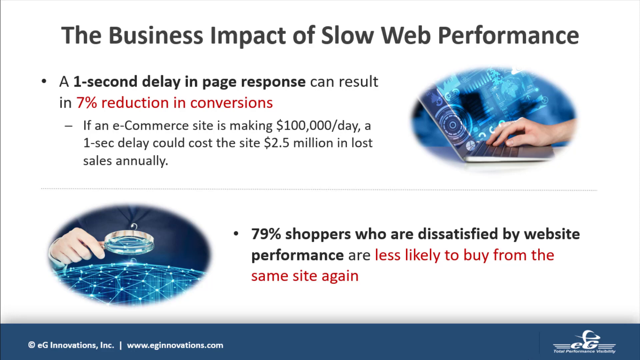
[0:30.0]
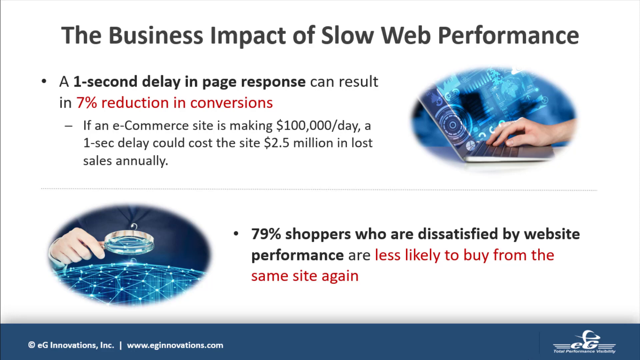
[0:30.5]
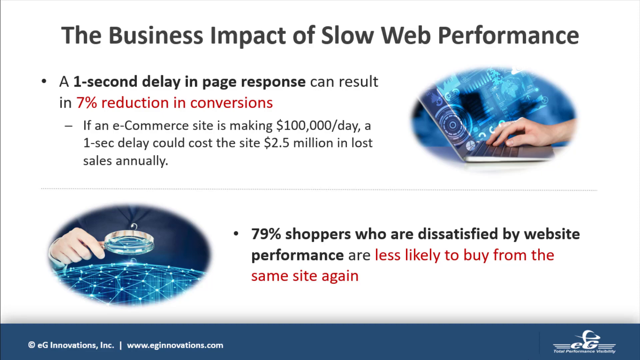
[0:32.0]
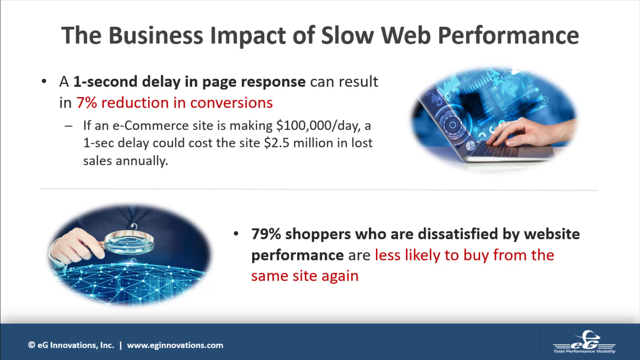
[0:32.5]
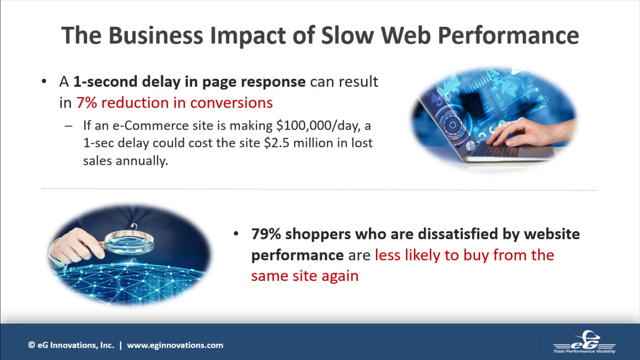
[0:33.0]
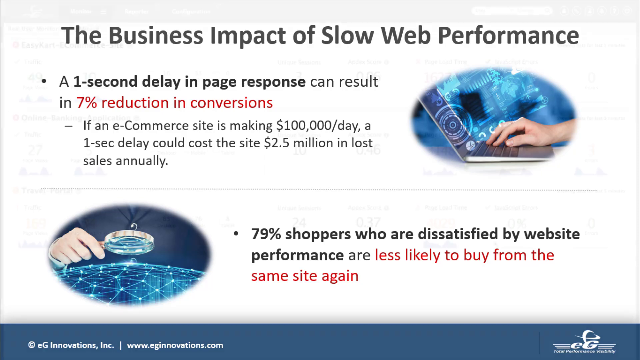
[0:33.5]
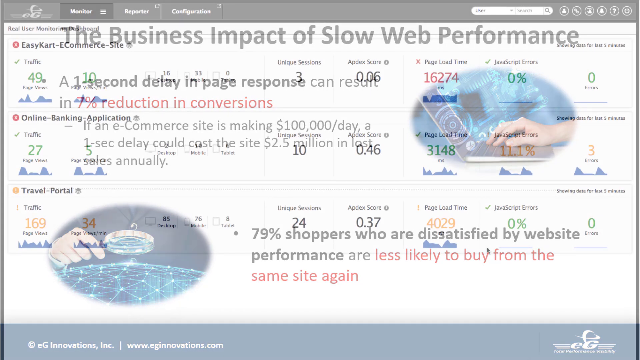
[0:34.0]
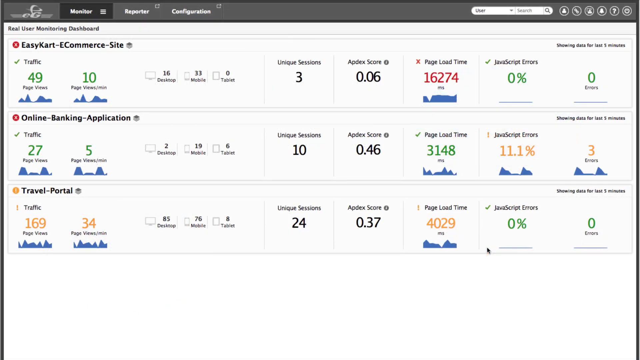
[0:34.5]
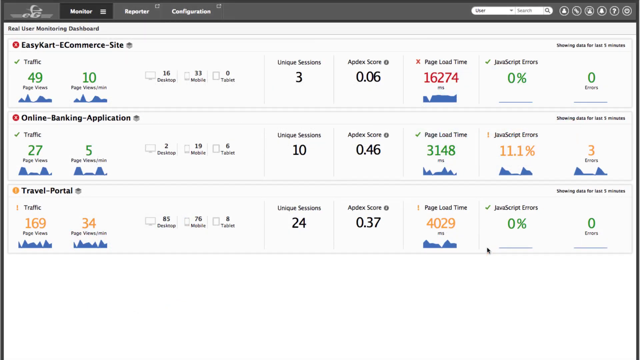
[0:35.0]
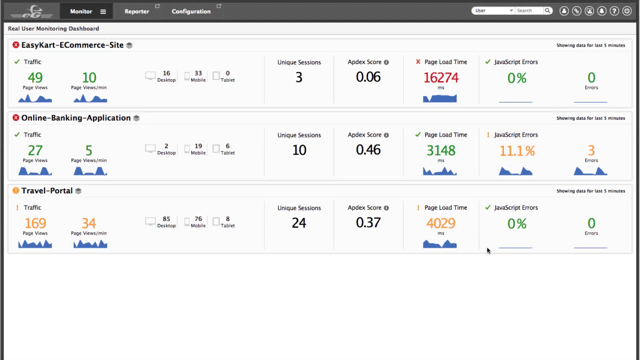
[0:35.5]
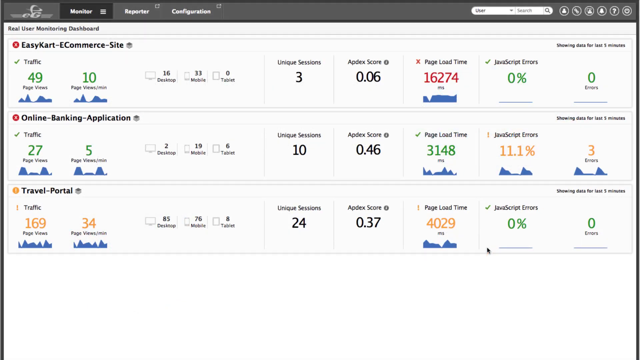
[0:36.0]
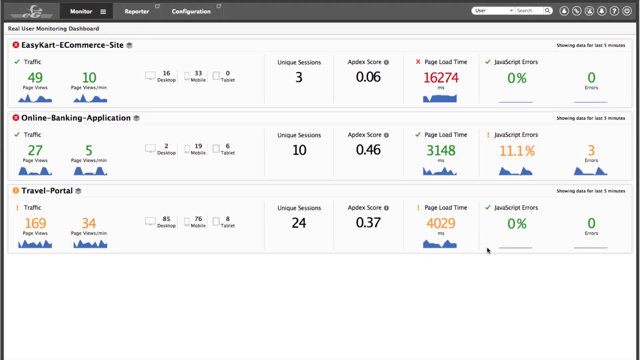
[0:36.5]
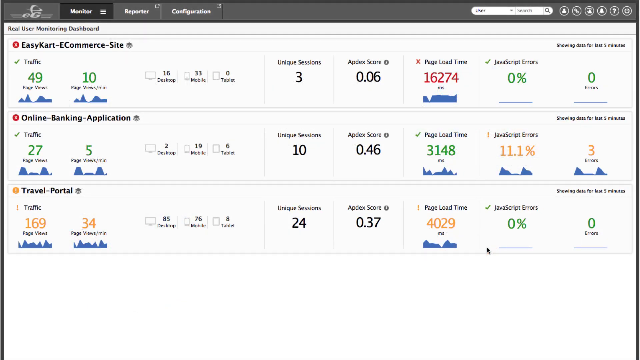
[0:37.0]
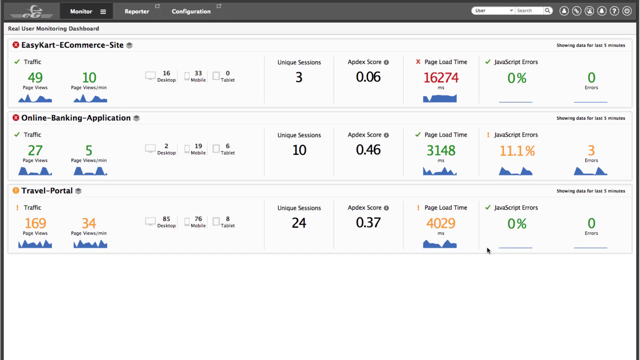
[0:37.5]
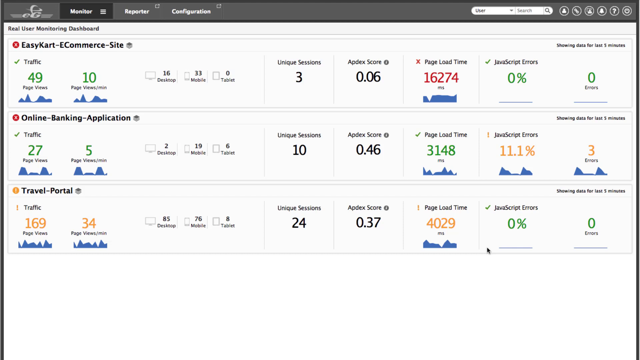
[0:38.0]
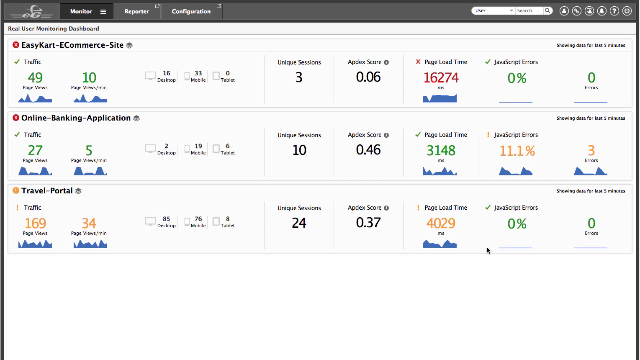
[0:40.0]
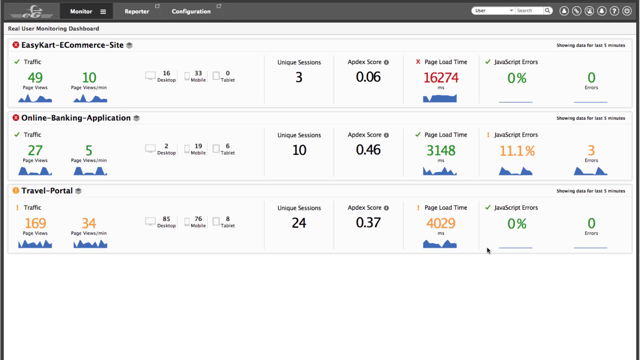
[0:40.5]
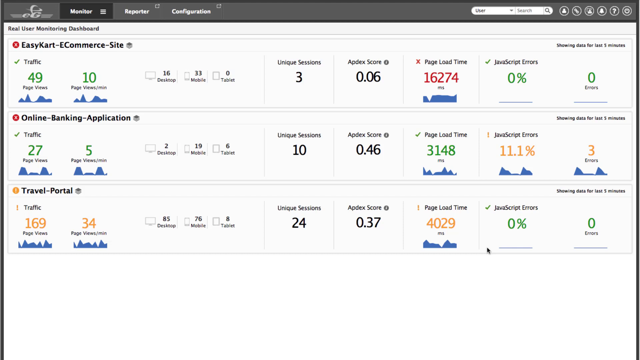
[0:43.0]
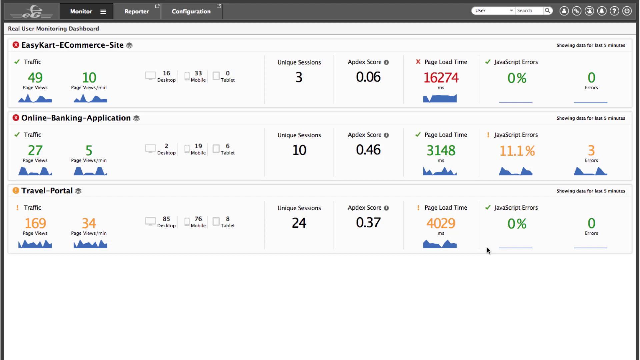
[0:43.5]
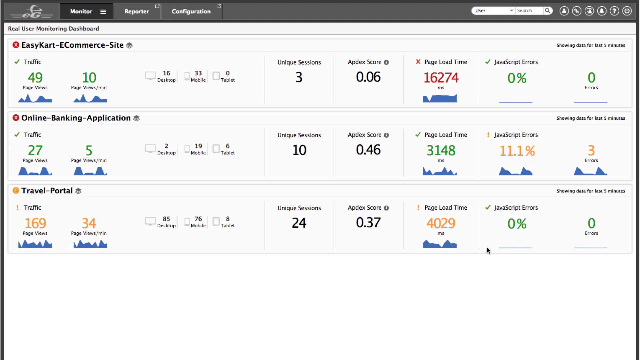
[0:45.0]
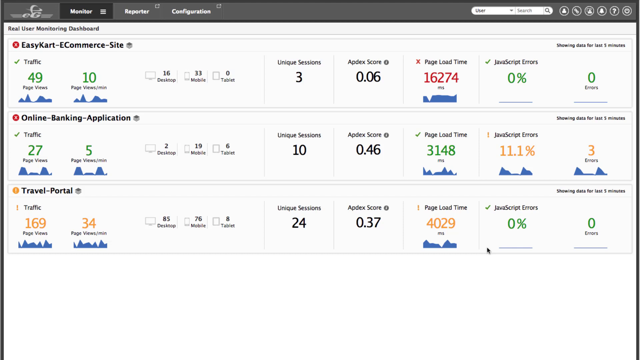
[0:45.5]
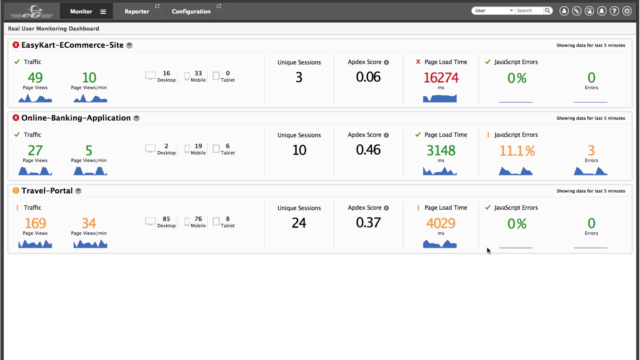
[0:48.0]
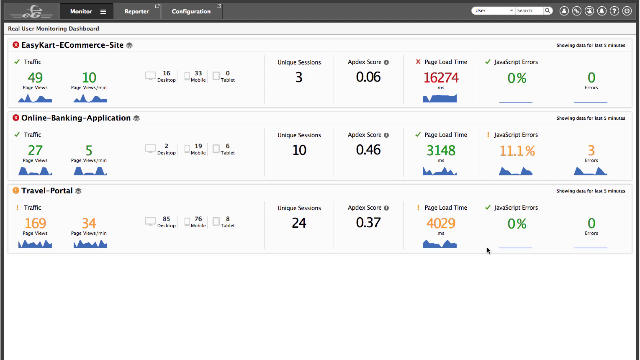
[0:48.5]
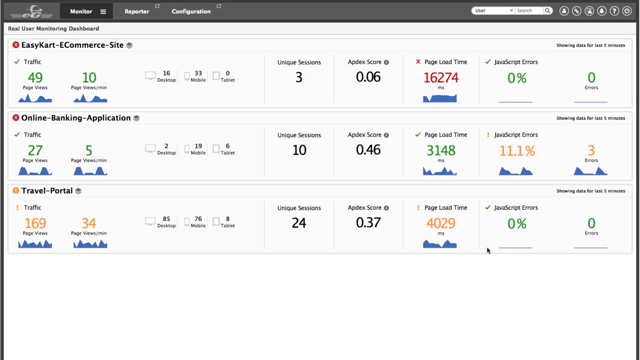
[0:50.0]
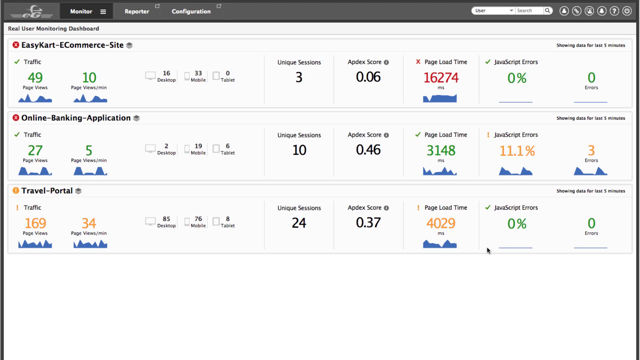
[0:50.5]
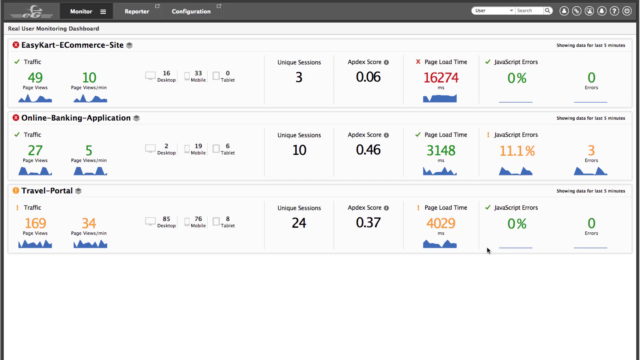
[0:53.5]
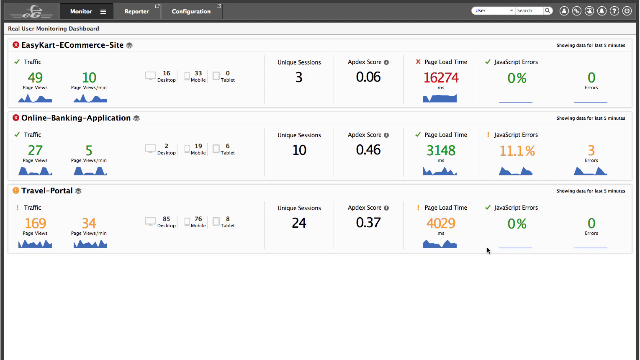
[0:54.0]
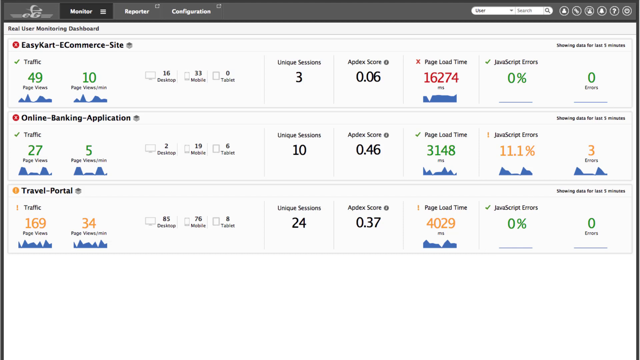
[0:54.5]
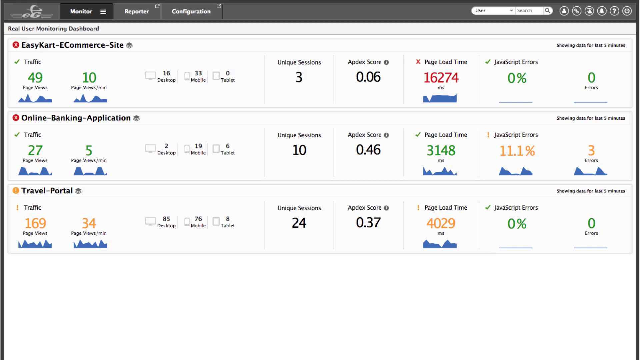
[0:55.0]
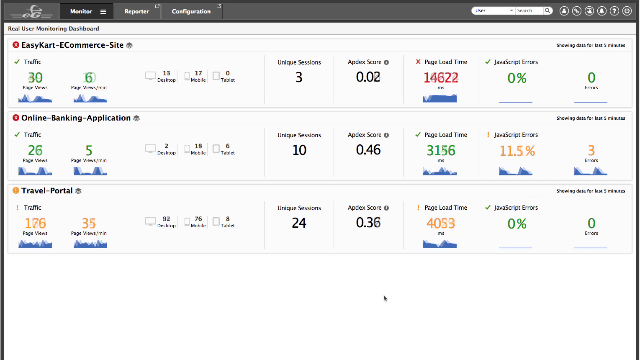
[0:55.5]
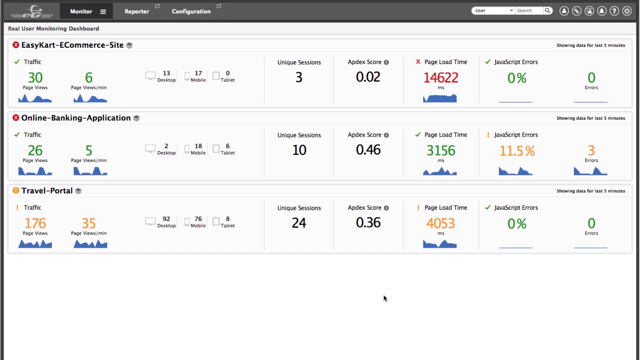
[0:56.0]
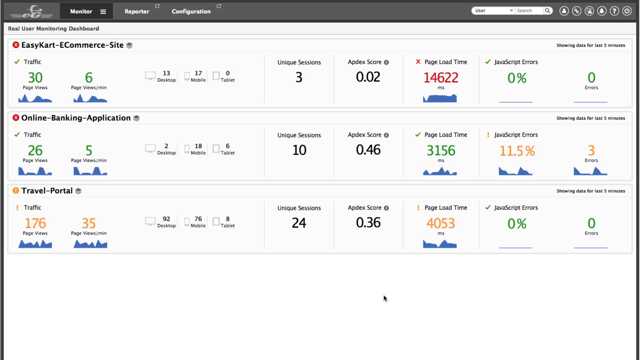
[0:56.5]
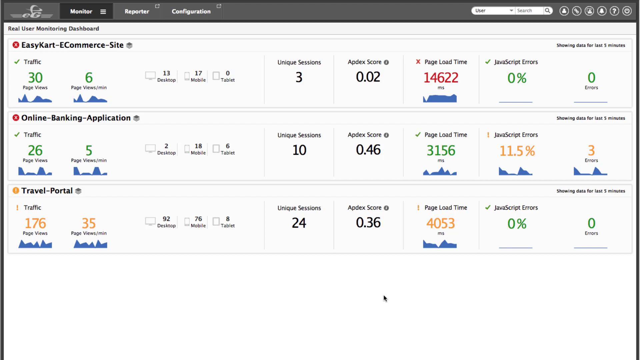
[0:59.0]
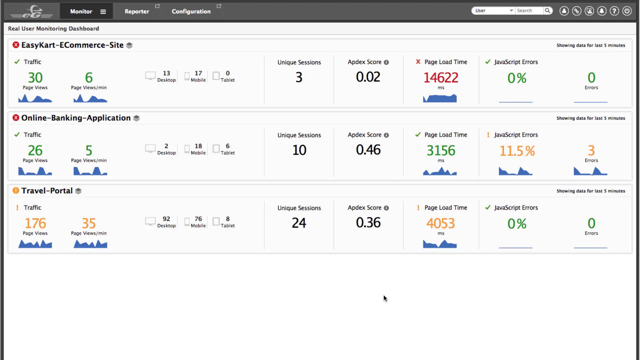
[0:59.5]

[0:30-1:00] The same PowerPoint slide is shown, and after a few seconds it fades and transitions to another screen labeled "Real User Monitoring Dashboard" at the top left. Three sections feature information such as "Unique Sessions," "Apdex Score," "Page Load Time," "JavaScript Errors," and "Errors." The three sections are for "EasyKart-ECommerce-Site," "Online-Banking-Application," and "Travel-Portal." Below each of those names on the left is traffic information such as page views and page views per minute. The statistics in each section start out as one set, and toward the end they smoothly fade into another set of numbers. Each section has different numbers for its Apdex score and the other categories. Only EasyKart and Travel Portal have no JavaScript errors or errors.